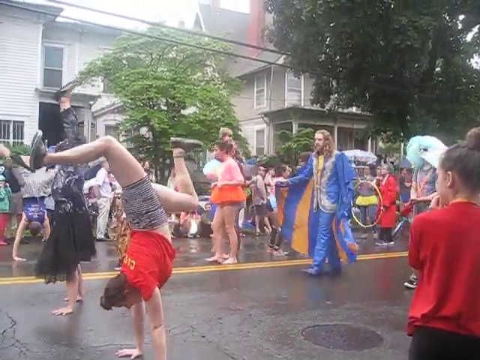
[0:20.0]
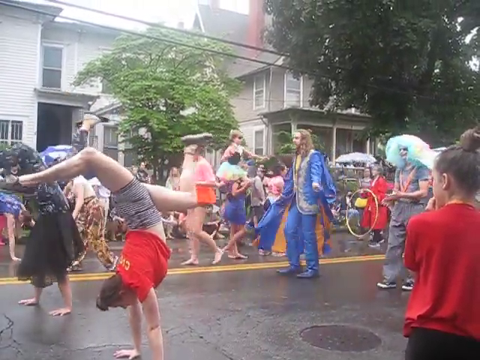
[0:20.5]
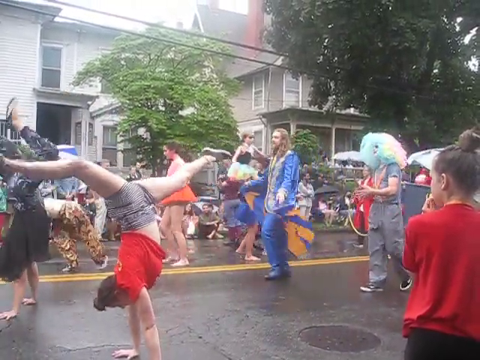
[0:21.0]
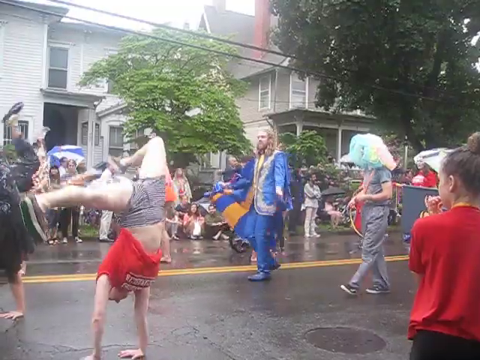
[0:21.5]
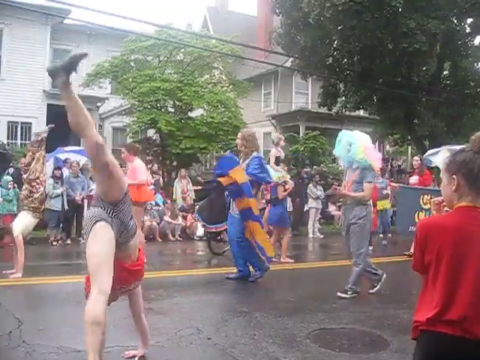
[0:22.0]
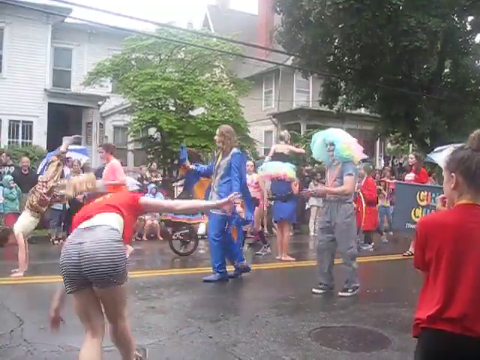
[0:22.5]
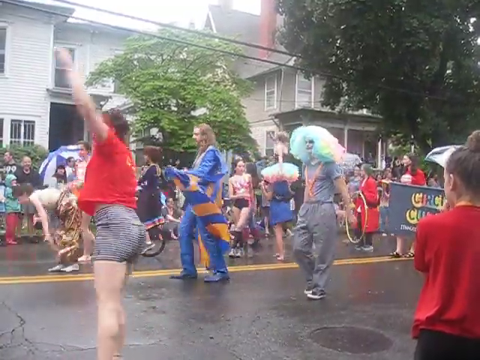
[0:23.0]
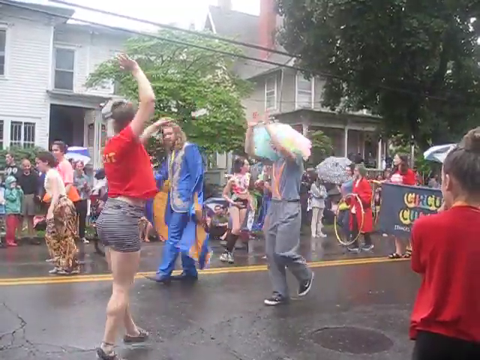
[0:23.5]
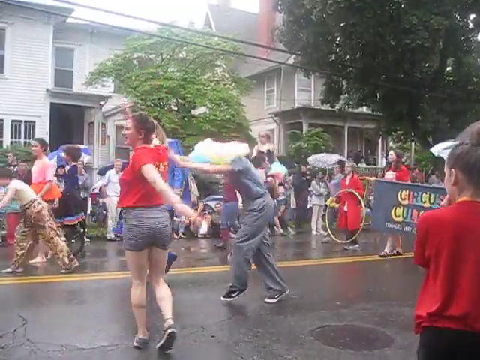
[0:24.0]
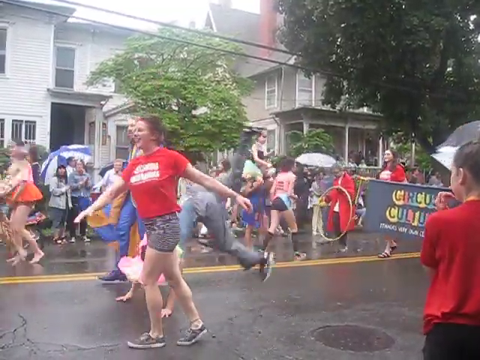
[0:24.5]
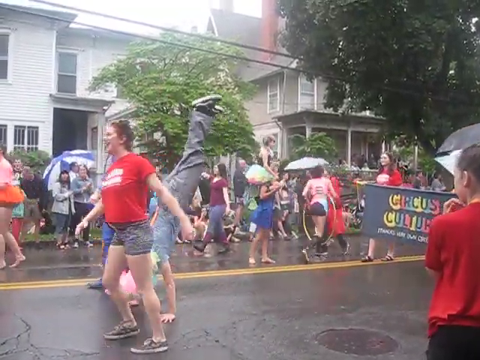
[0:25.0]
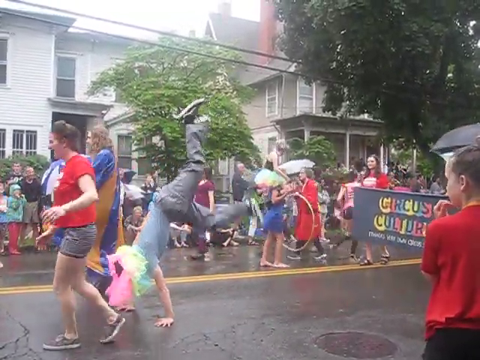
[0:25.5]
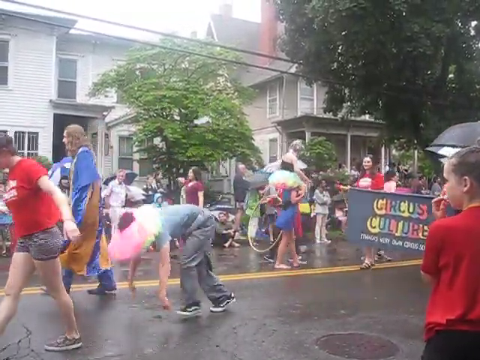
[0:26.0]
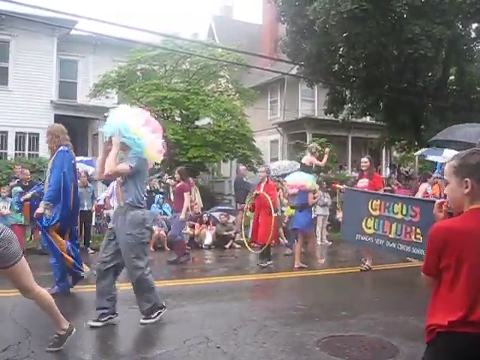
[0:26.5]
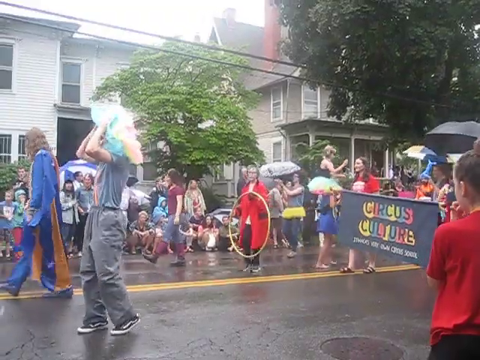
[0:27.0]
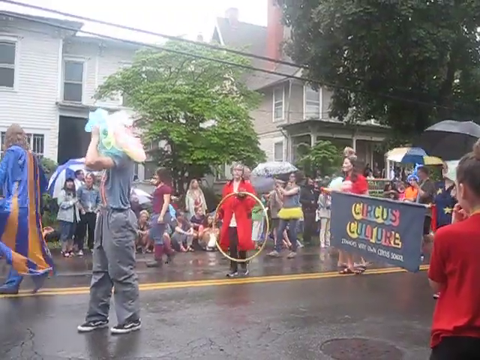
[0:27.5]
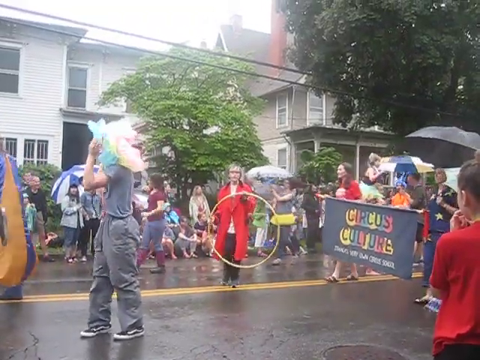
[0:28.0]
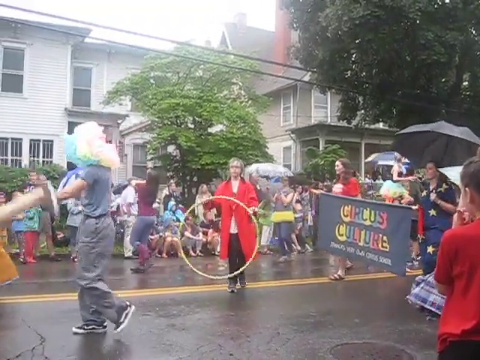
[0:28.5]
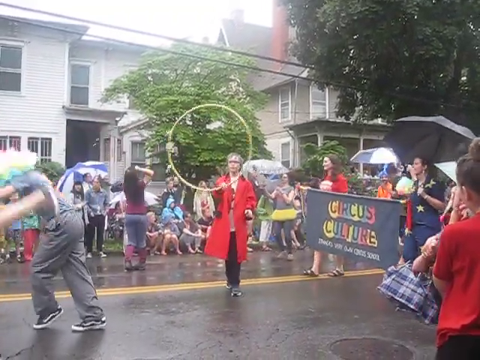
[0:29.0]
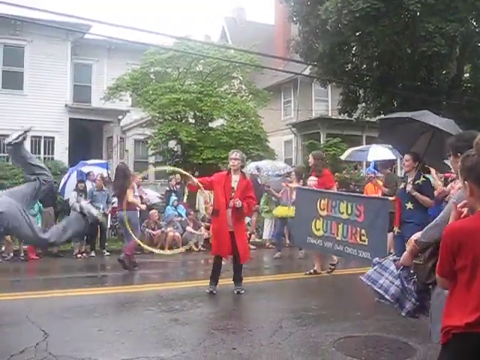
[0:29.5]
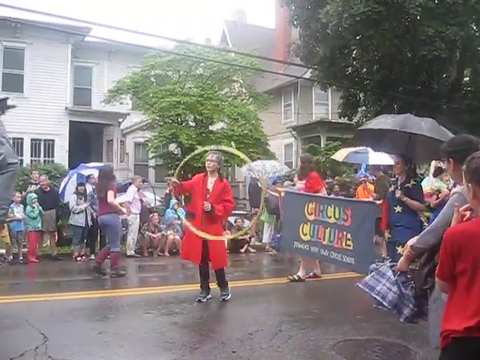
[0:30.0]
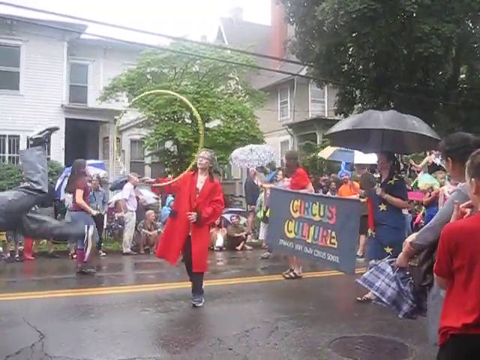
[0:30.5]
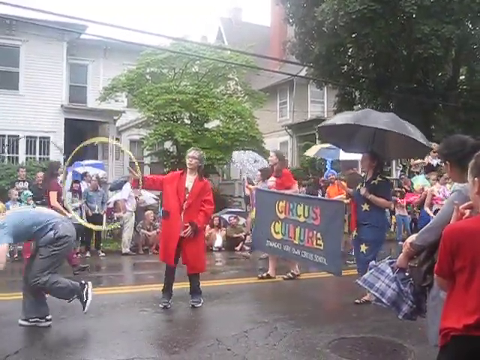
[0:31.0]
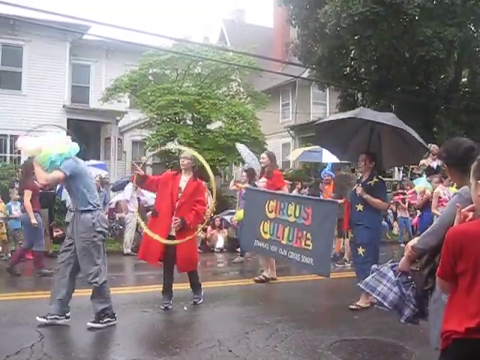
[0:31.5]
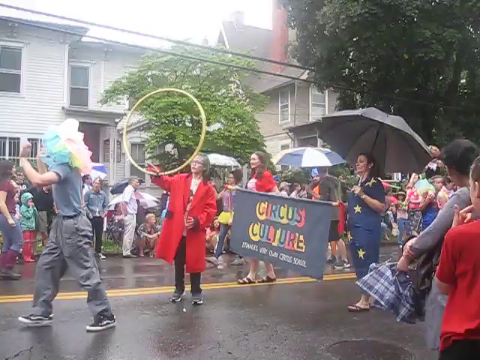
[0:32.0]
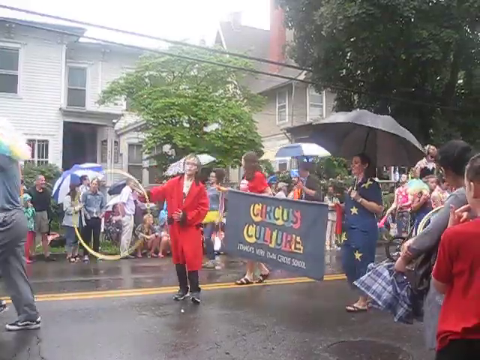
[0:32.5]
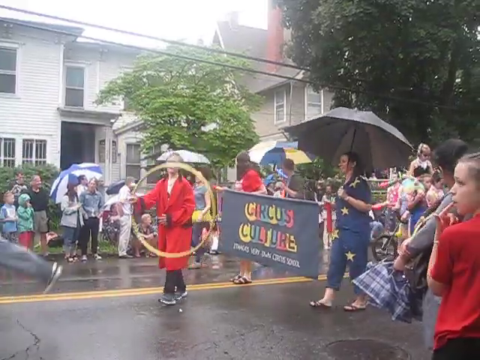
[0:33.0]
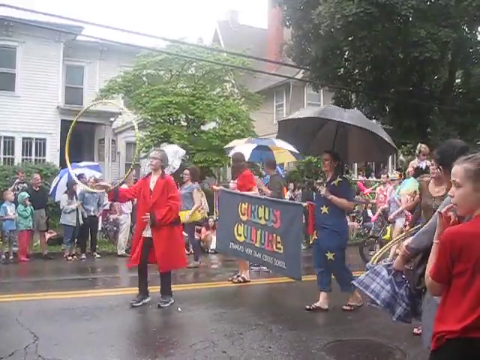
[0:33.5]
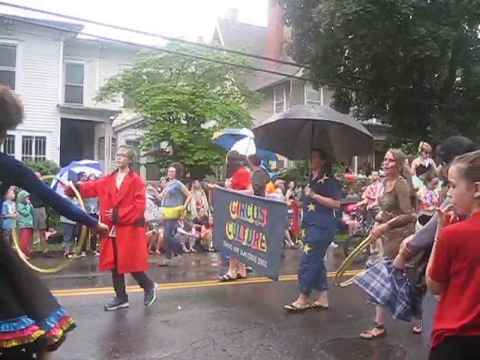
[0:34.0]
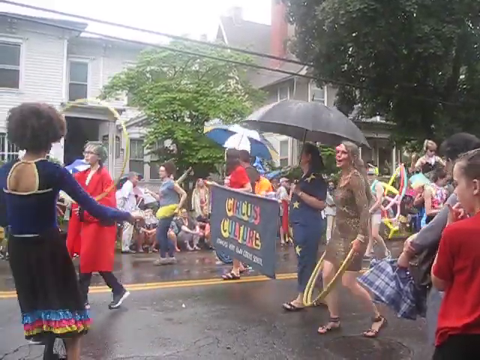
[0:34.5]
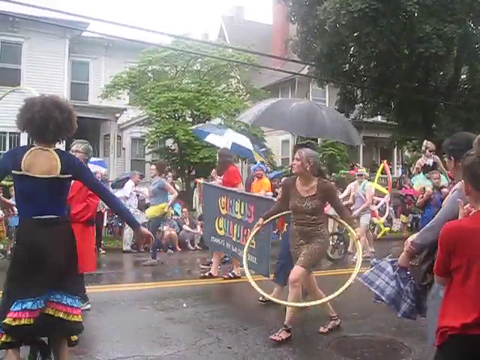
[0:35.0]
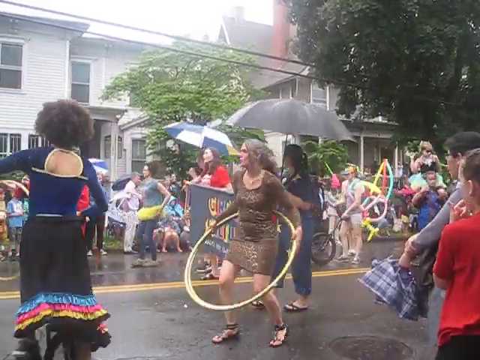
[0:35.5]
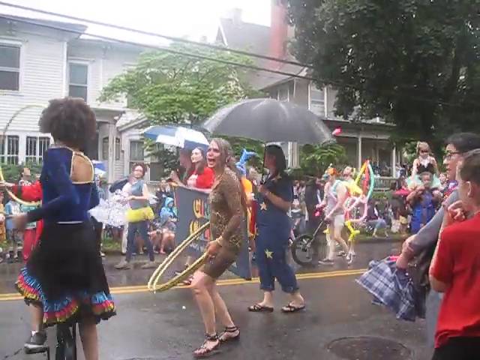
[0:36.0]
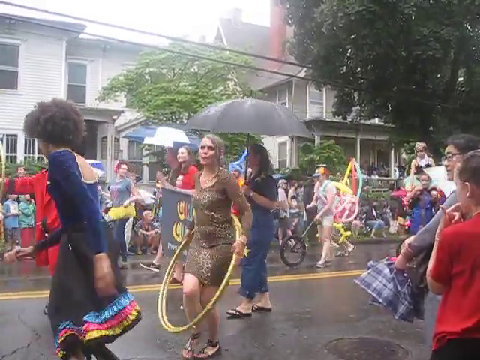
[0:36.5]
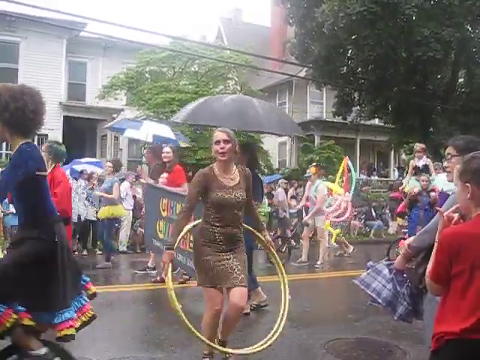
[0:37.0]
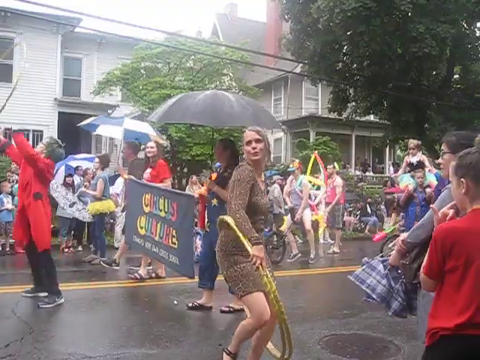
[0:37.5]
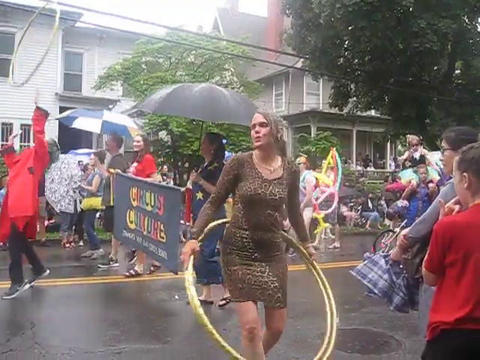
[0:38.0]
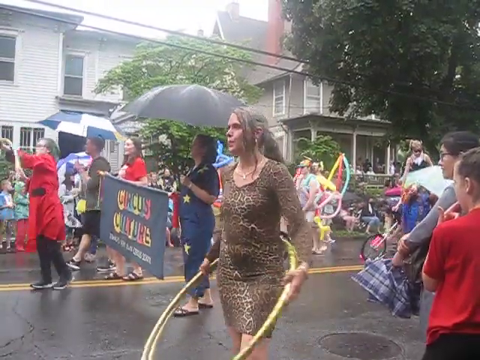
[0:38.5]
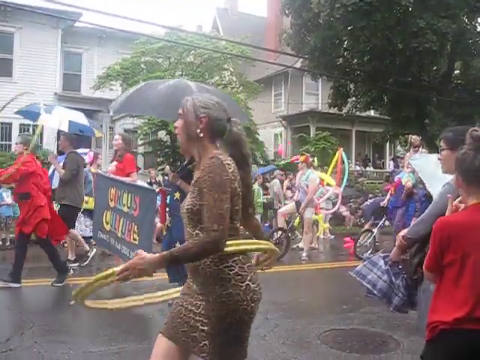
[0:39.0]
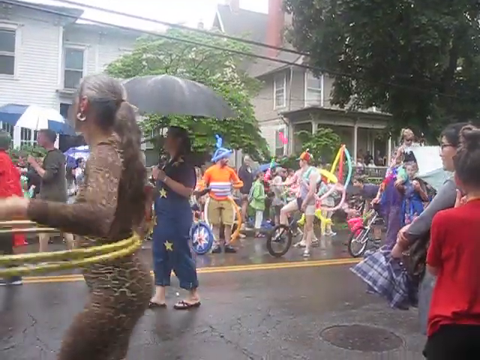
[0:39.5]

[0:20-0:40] In a street scene outside some houses, people line the pavements with umbrellas, and the ground is wet; it has obviously been raining. A procession goes down the centre of the road. Girls walk on their hands while doing splits, cycling and twirling around. A man wears a blue, yellow and shiny suit that looks like a kind of ringleader's suit. A man in grey jogging bottoms and a big fluffy, kind of clown afro wig joins in, doing handstands as he walks along. Children hold a big banner that says "Circus Culture"; it is a little circus school procession. Someone in a red ringleader's coat walks along with a hula hoop on his hand. A girl in a gold dress has two gold hula hoops around her waist.